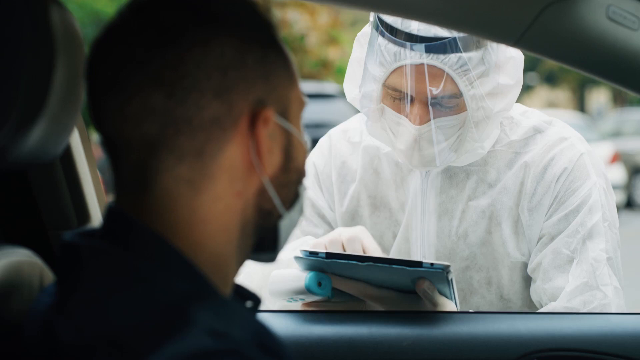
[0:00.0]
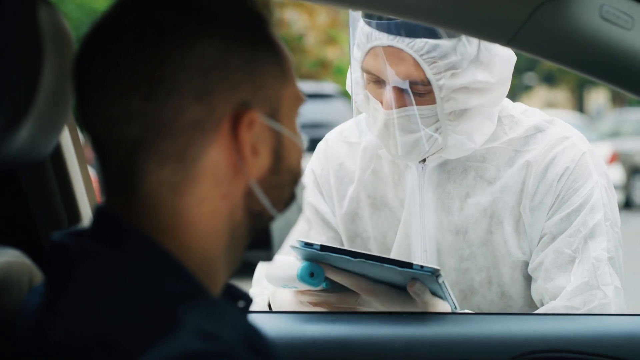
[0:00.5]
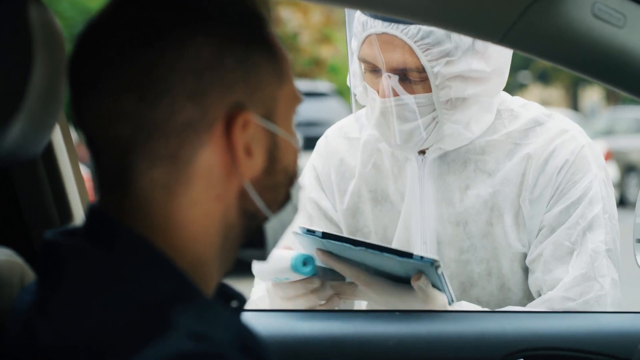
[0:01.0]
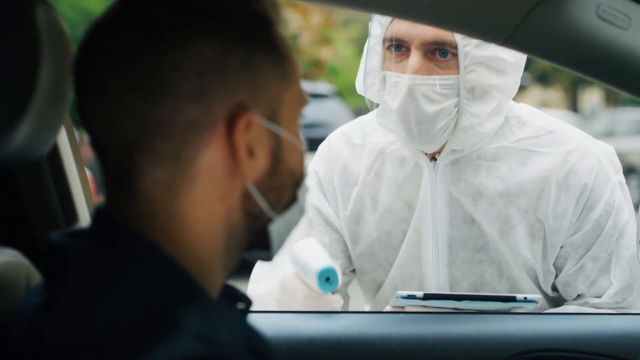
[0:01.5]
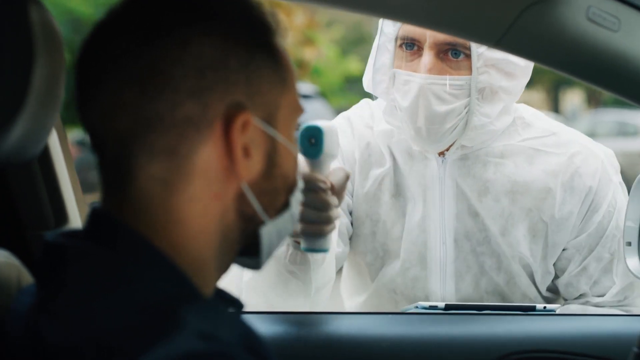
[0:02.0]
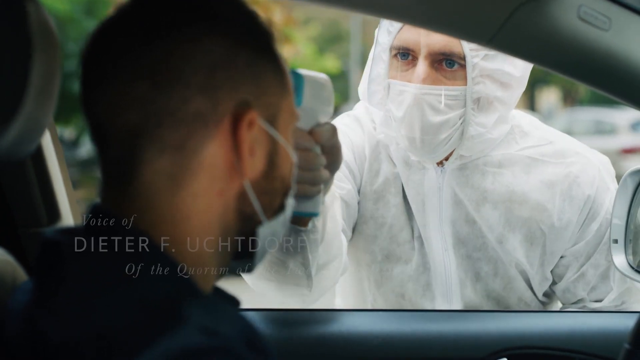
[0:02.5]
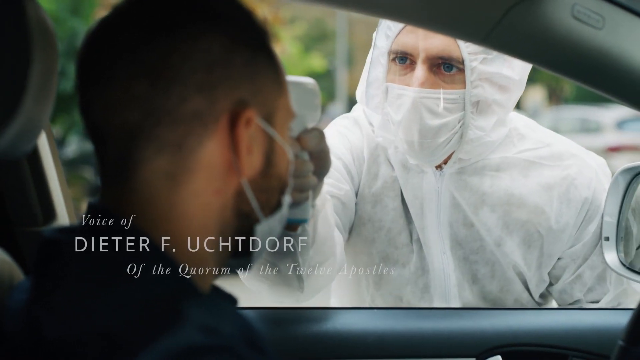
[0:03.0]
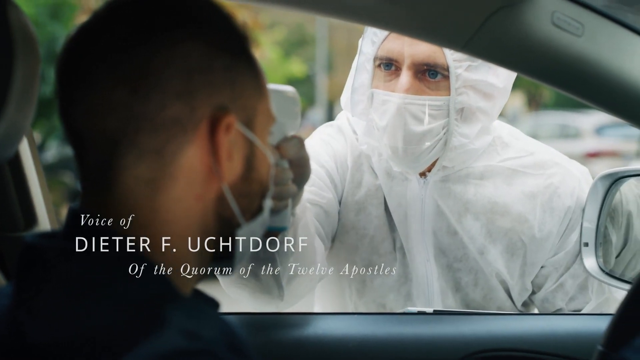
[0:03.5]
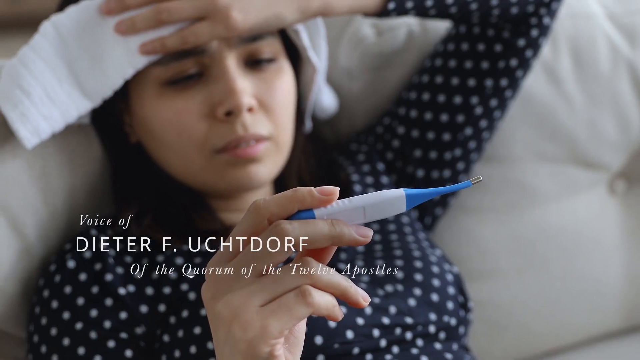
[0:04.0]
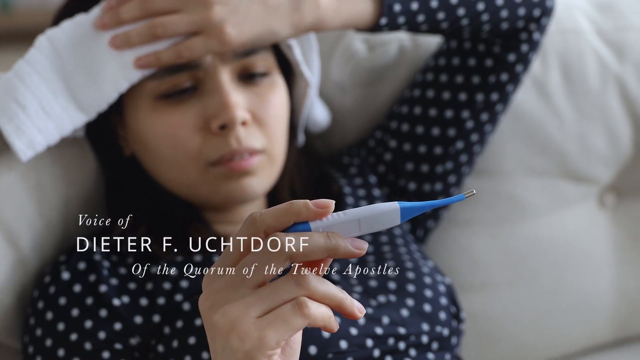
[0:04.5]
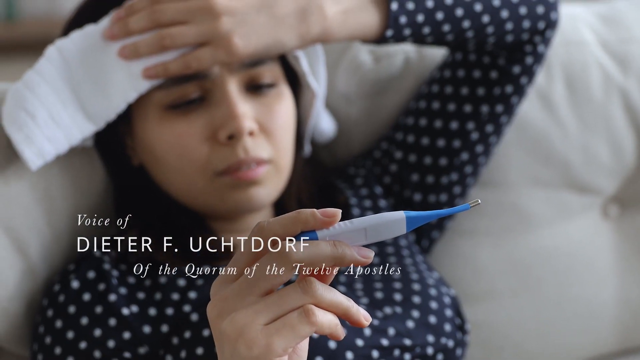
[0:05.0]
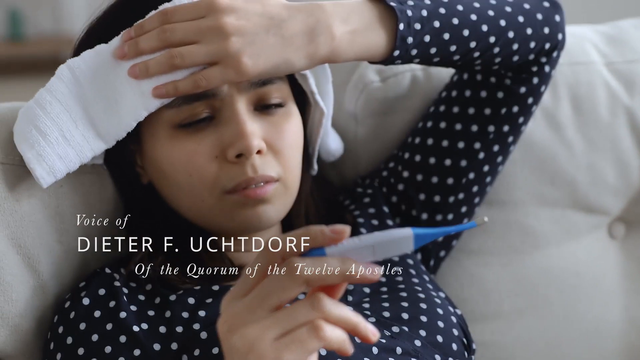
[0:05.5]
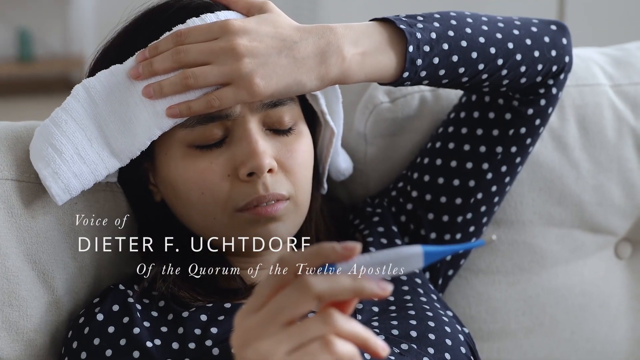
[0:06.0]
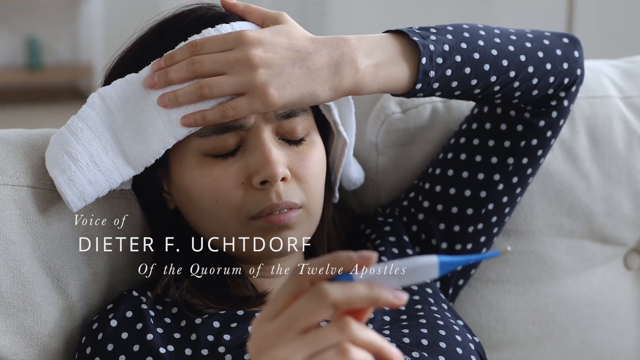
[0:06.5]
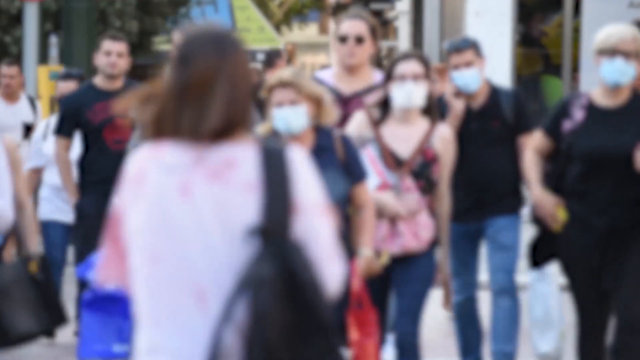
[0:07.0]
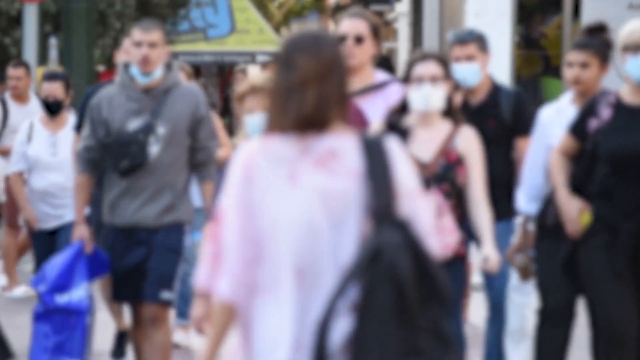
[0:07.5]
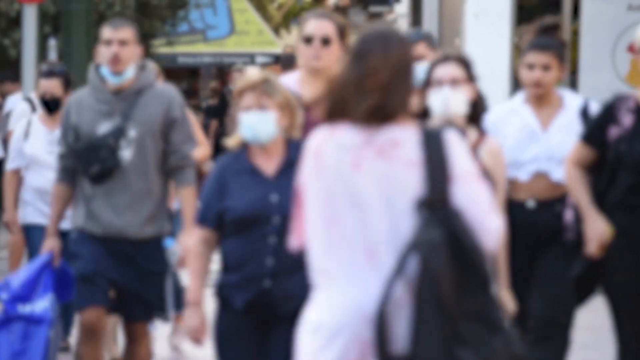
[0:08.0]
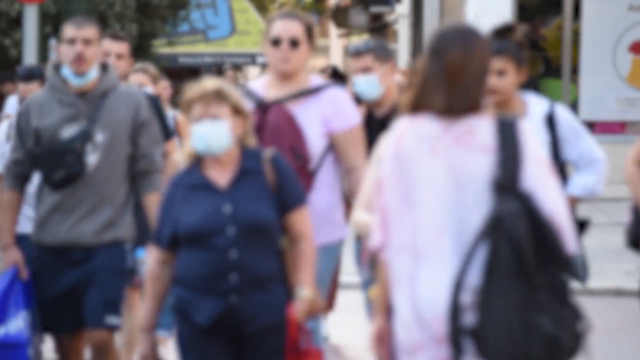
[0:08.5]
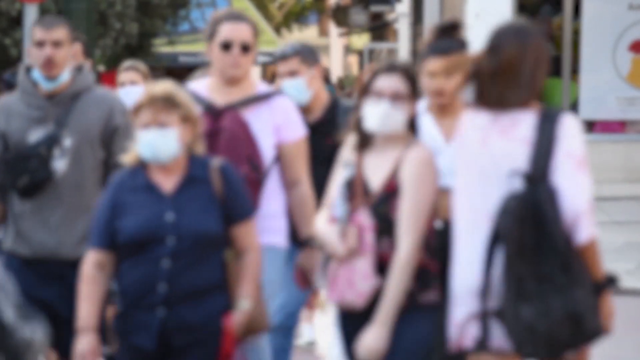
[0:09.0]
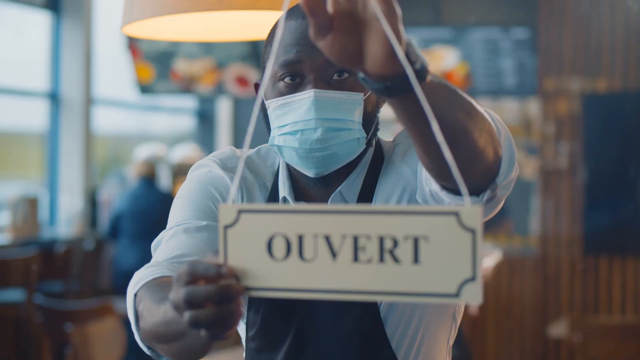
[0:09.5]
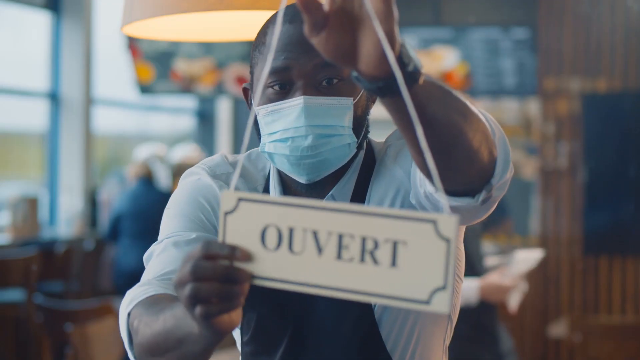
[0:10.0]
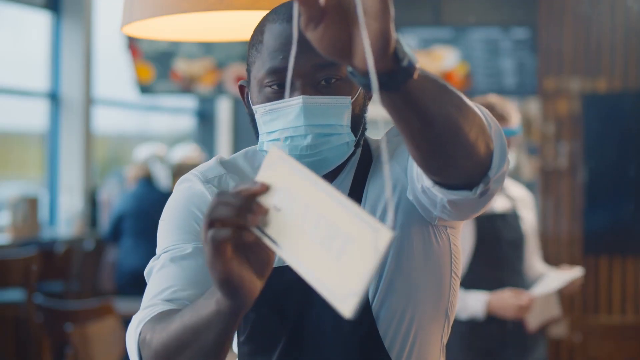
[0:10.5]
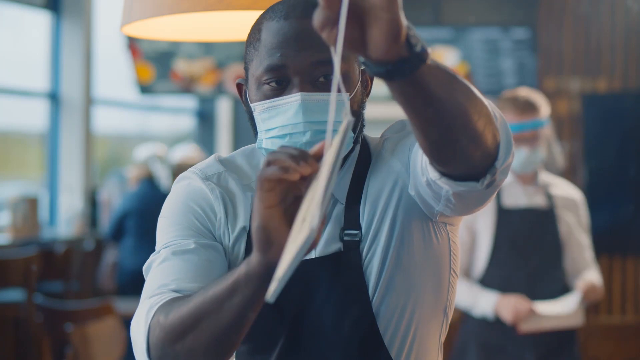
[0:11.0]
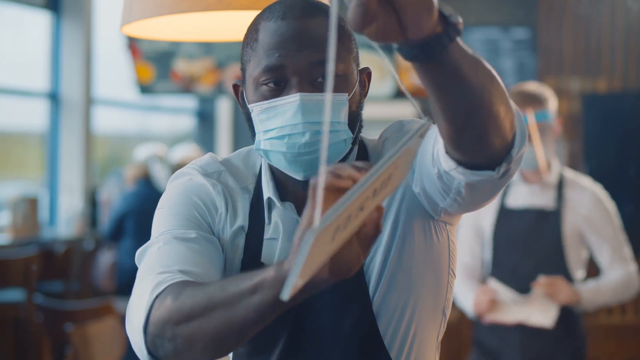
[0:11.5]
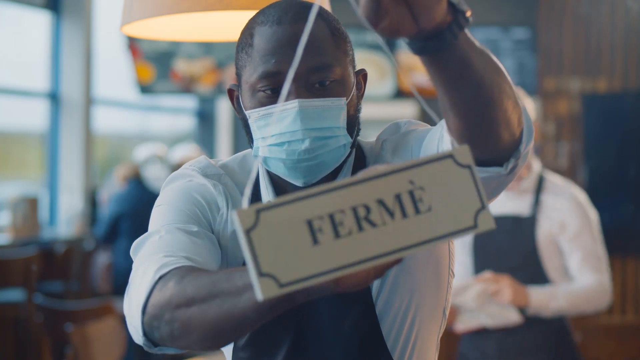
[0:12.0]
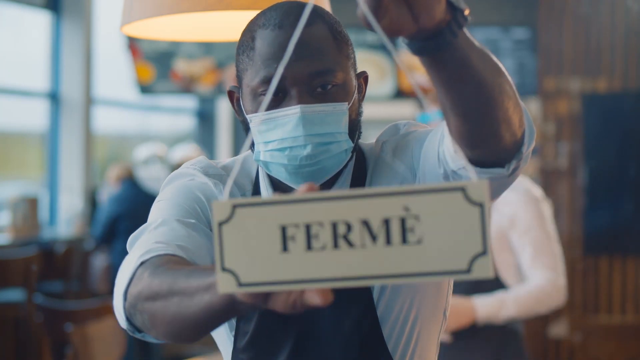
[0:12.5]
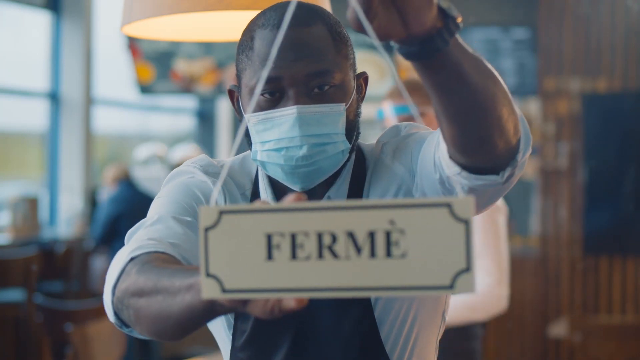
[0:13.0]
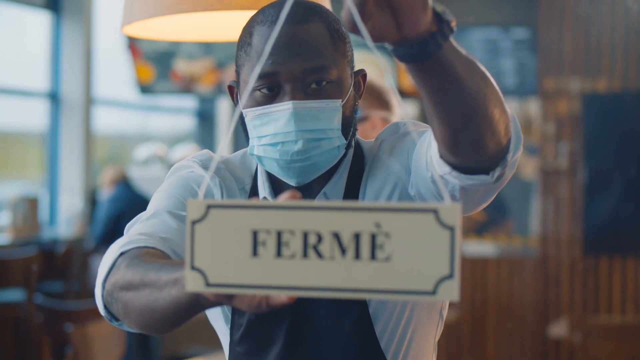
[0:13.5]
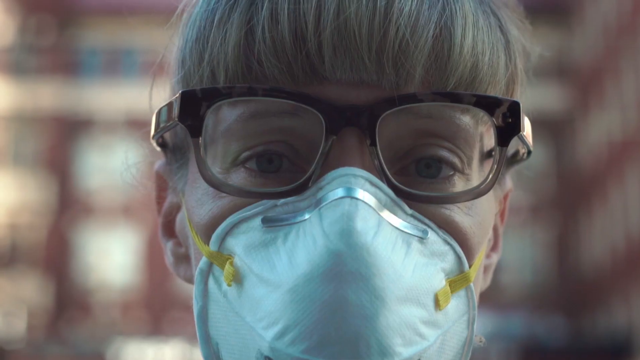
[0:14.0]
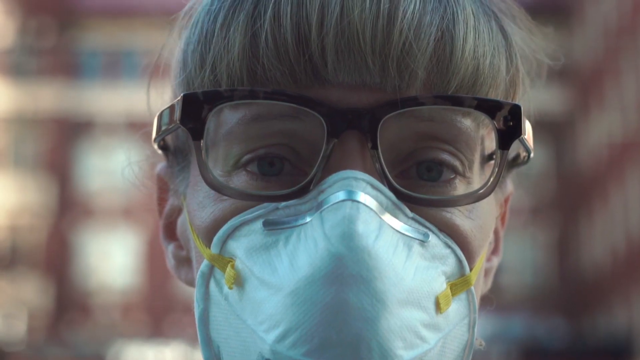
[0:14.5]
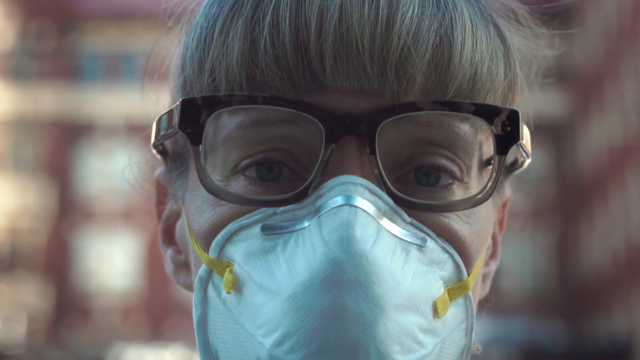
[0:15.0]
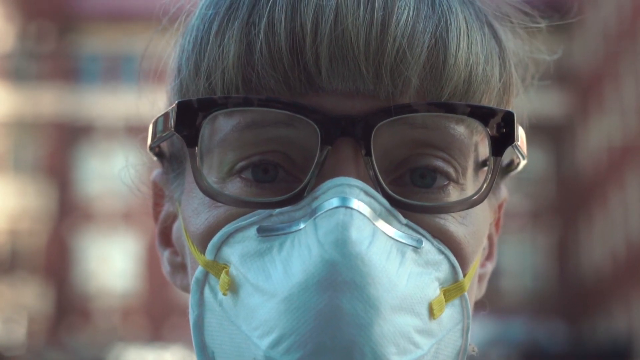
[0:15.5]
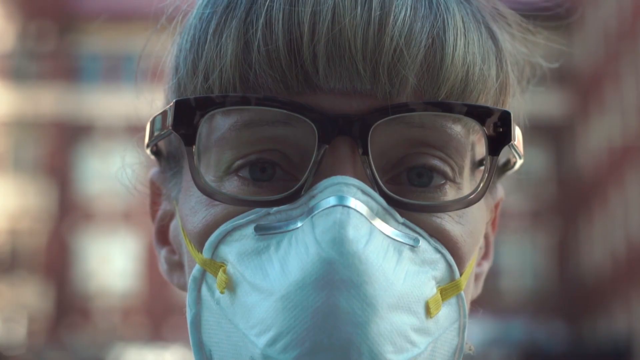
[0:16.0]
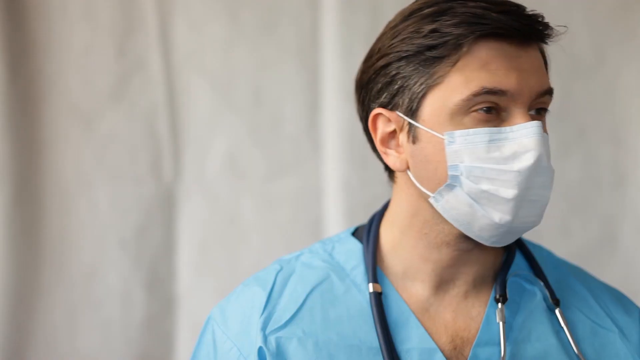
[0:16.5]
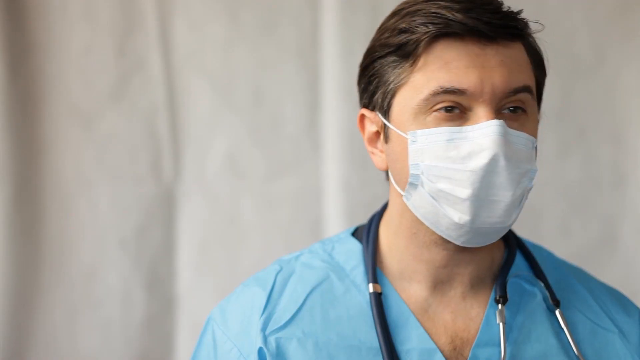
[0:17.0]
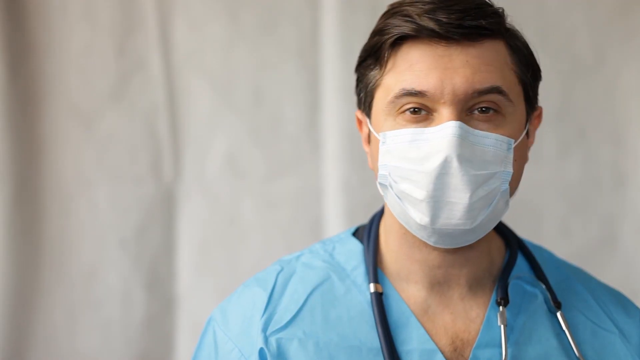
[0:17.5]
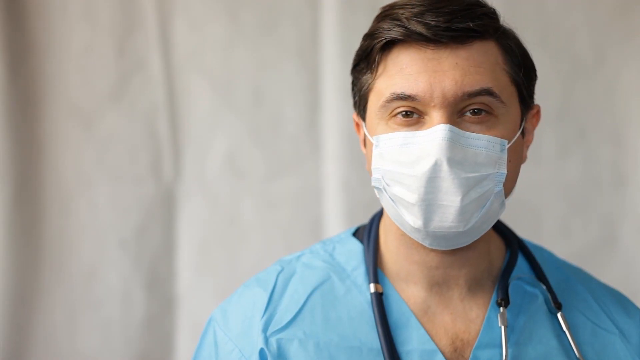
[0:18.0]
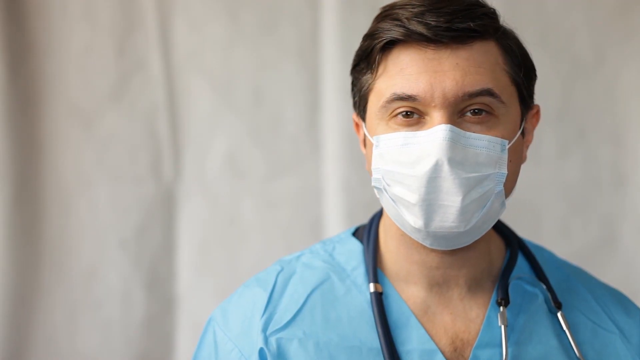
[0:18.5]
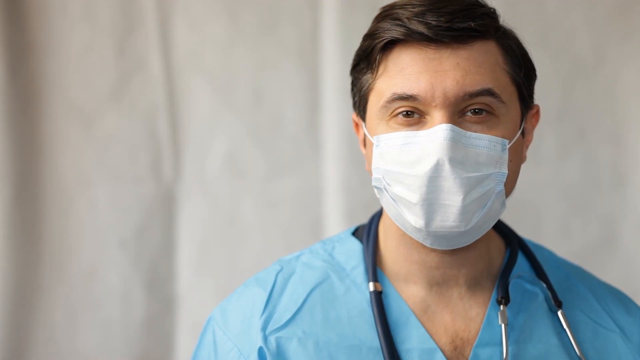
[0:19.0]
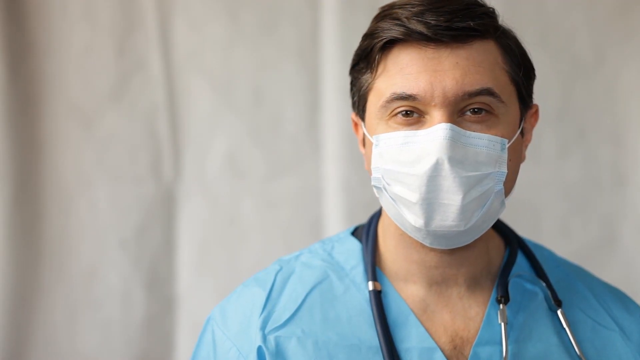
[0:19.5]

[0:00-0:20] No title is visible. A person who might be a Black man or an Arab American sits in a car wearing a face mask. A man in a protective medical suit made of a very gauzy material holds an iPad and wears a face shield and a face mask. He takes the temperature of the person in the car. The lighting is very light on top. On-screen text reads "Voice of Dieter F. Uchtdorf" and "Quorum of the Twelve Apostles"; the white letters run over the man's white suit, making them hard to read. A woman on a couch has her temperature taken and looks sick. People walk around. A man at what looks like a cafe turns a sign, written in French, from open to closed.